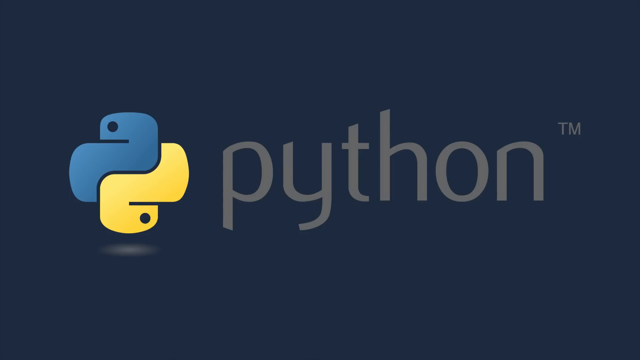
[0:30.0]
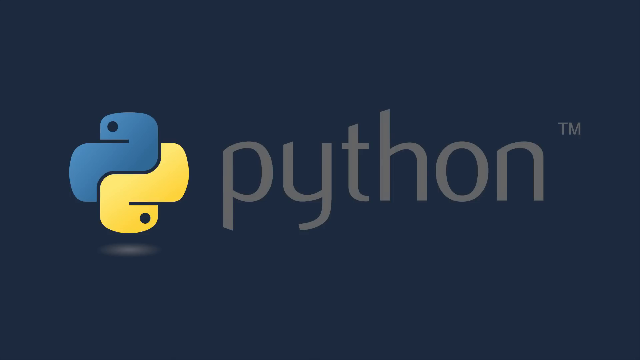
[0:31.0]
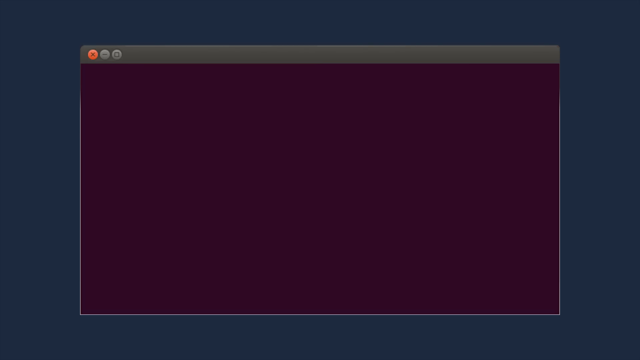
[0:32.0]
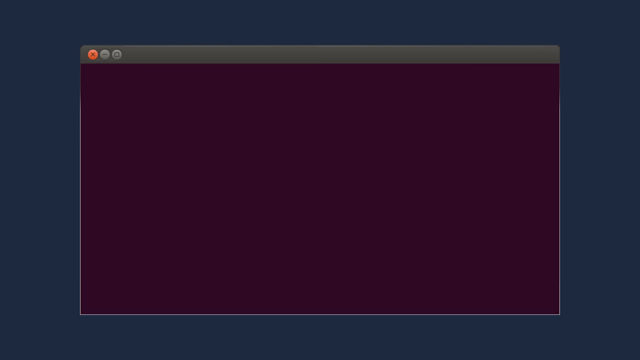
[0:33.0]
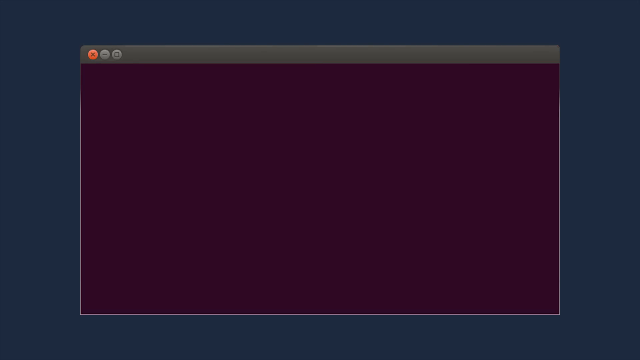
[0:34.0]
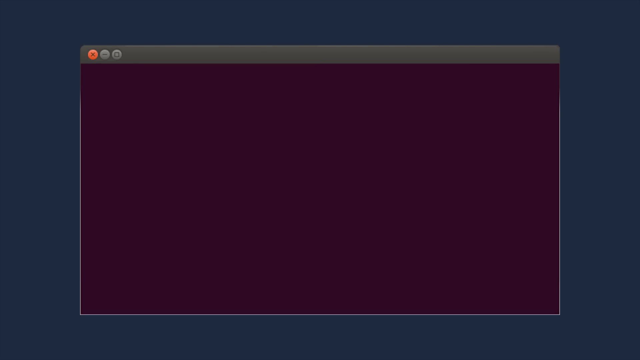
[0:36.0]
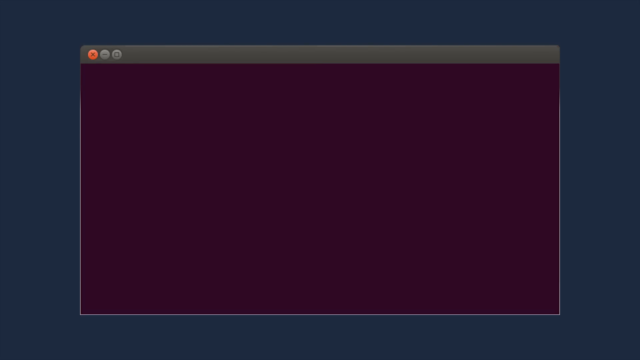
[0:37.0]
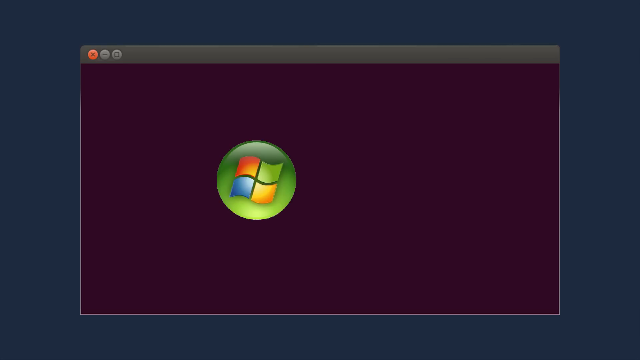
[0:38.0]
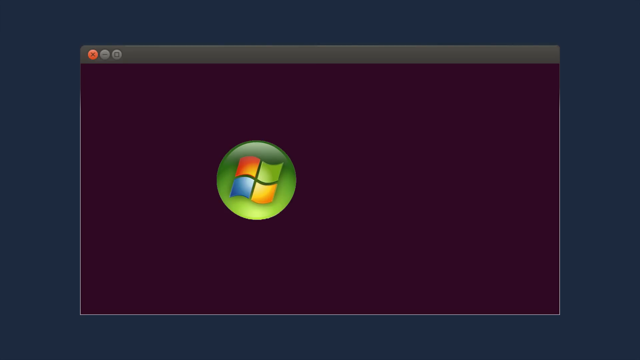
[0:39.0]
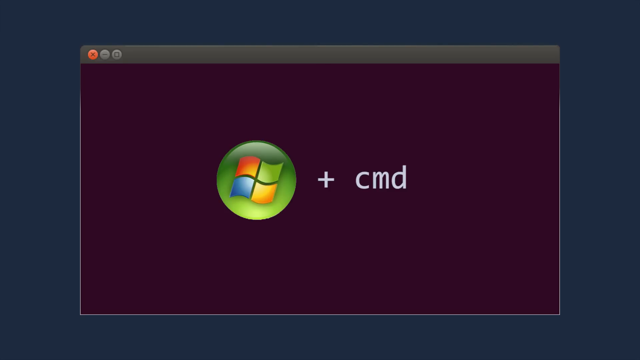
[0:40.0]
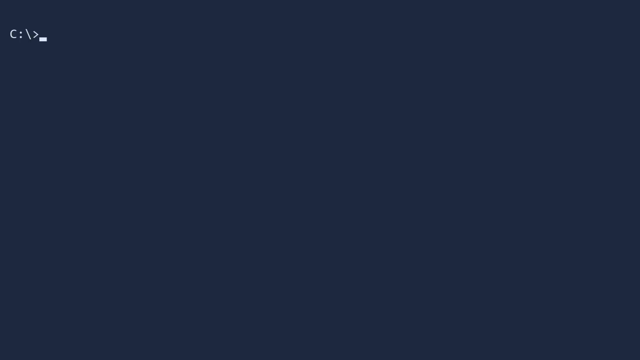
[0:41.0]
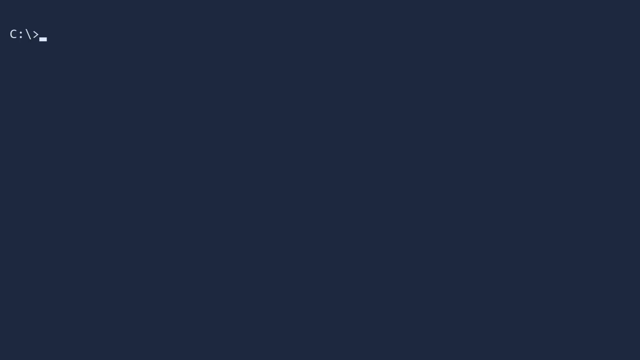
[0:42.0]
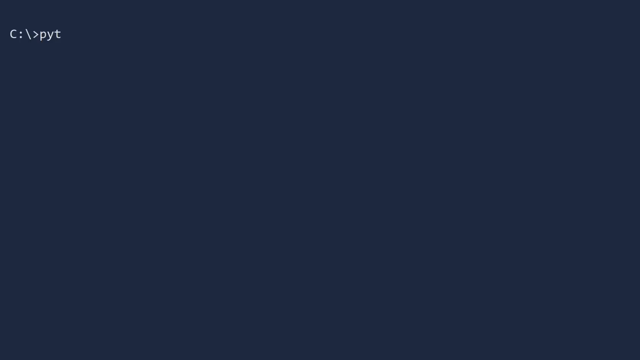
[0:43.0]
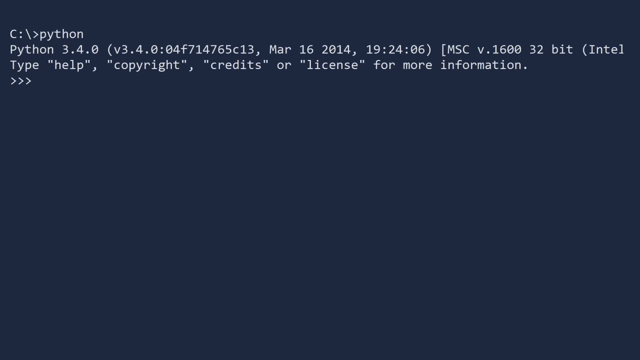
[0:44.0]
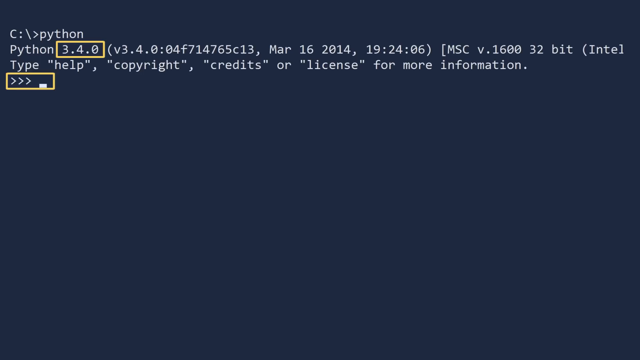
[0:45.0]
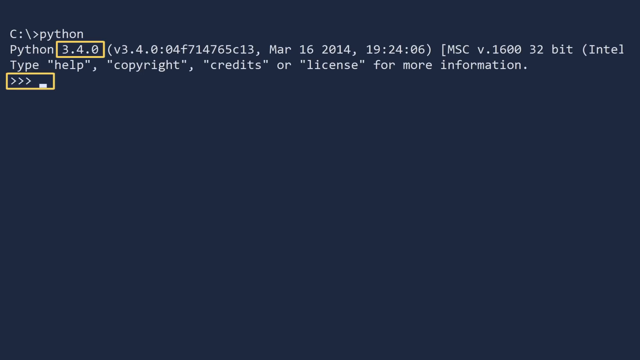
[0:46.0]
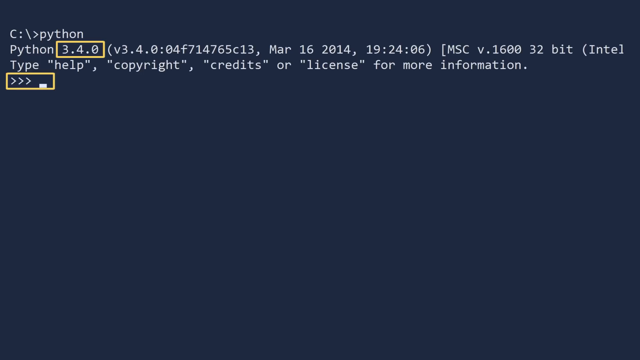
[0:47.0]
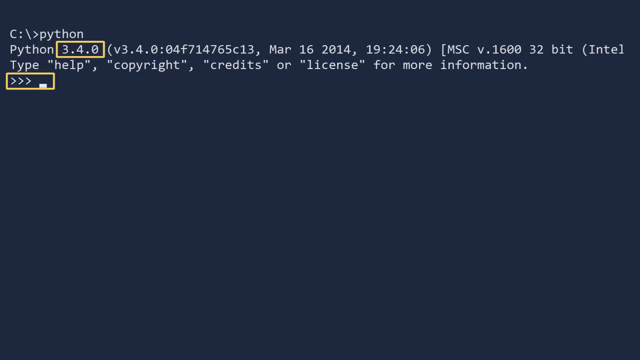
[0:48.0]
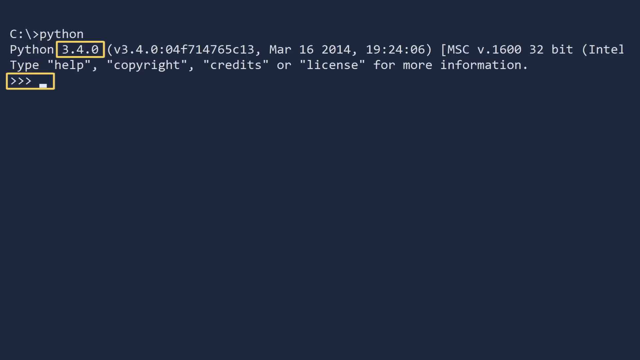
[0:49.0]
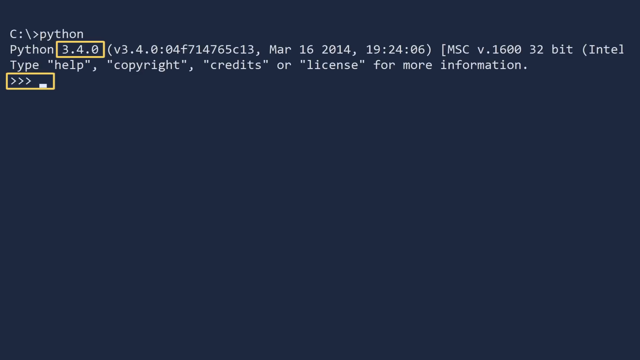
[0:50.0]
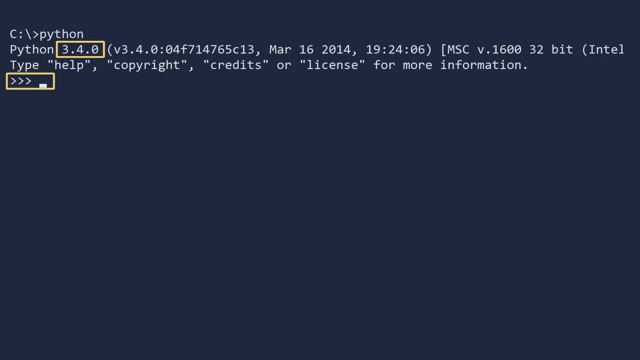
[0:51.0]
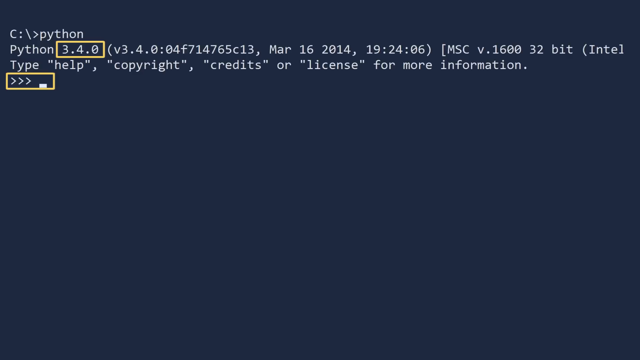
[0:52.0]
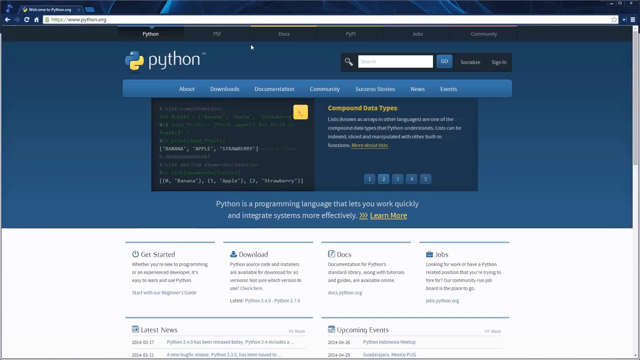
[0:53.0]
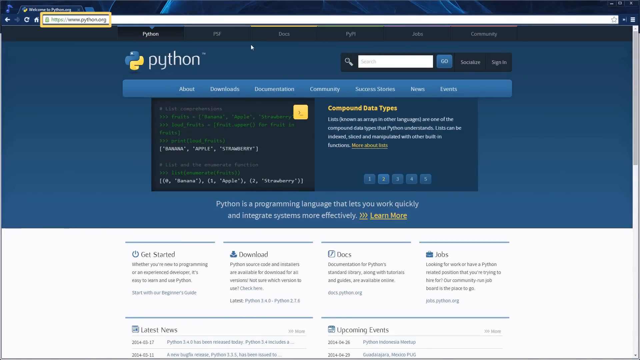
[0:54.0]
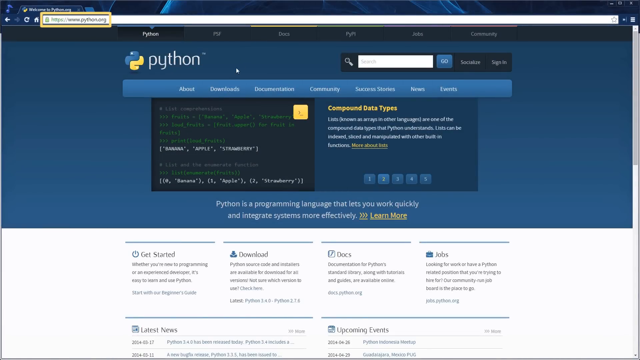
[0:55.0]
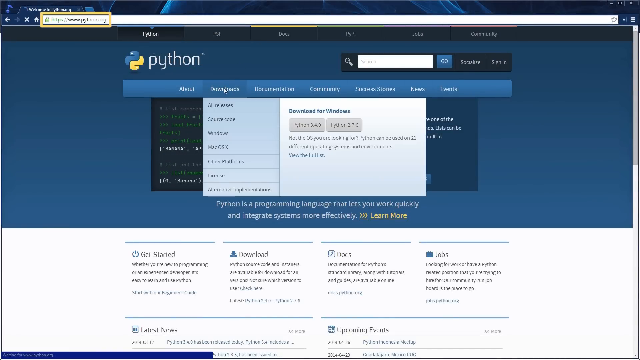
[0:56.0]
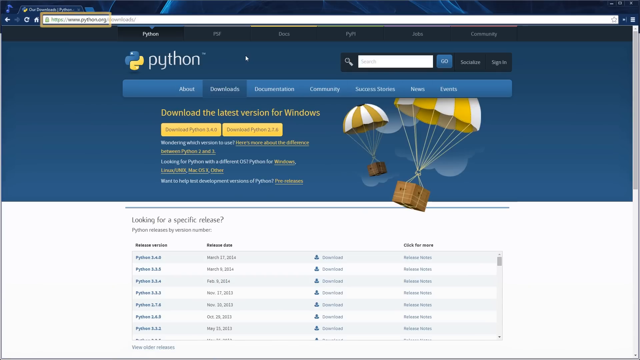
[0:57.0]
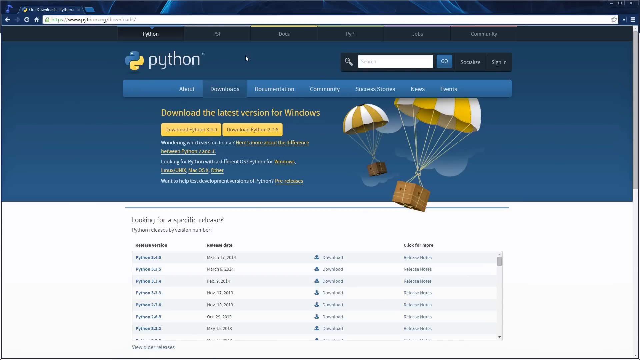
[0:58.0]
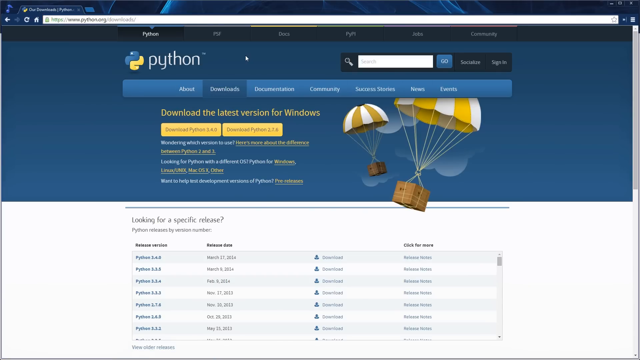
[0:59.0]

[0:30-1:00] The word "python", in all lowercase grey text, is in the center of the screen, with the blue and yellow Python logo to its left and a TM trademark symbol at the top right, all on a dark blue background. The screen transitions to the same dark blue background, now with what appears to be a terminal window in the middle. The terminal window has a dark purple background and is empty. The old Windows logo on a green background then appears in its middle, along with "+ CMD" in white text. The terminal window disappears, leaving only the blue background. At the top left, text emerges reading "C:\" followed by a forward arrow. The user types "python", and white text appears in the terminal showing the Python version and more information, with three forward arrows on the next line. The screen then transitions to the Python website, where the user clicks on downloads, bringing up the downloads page.